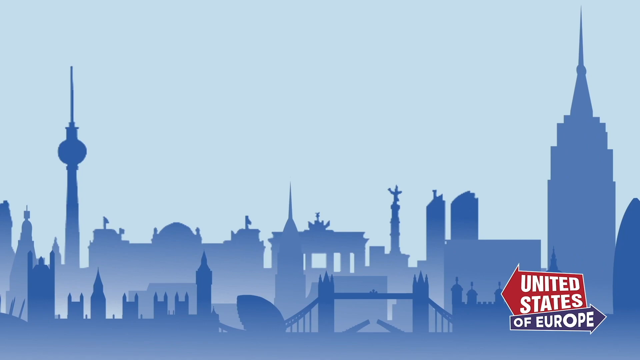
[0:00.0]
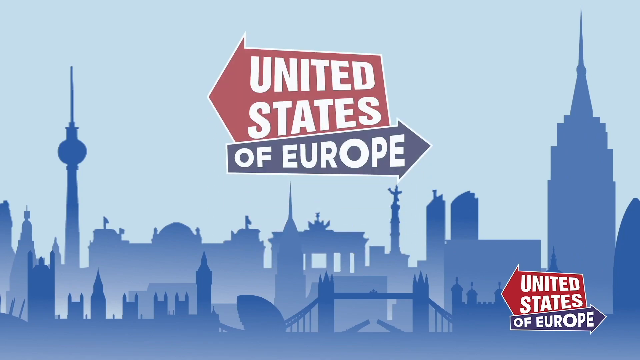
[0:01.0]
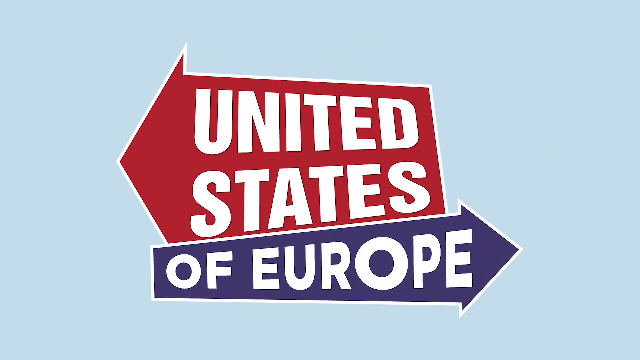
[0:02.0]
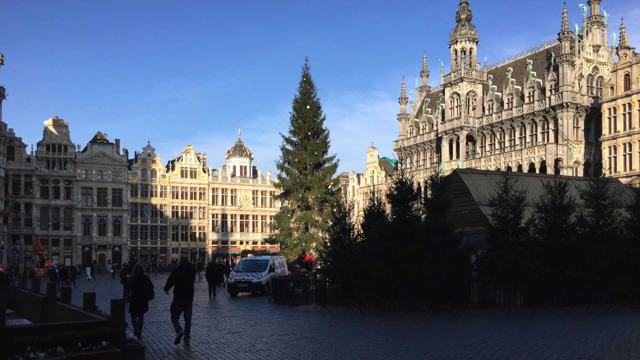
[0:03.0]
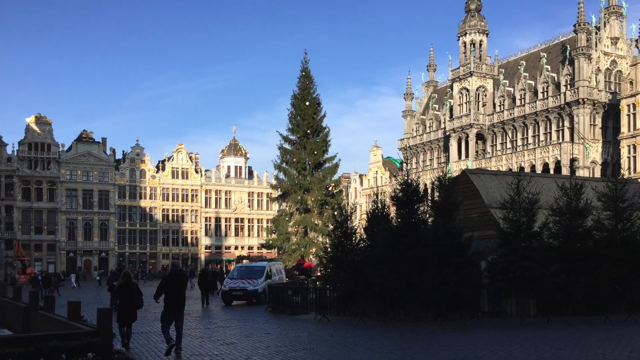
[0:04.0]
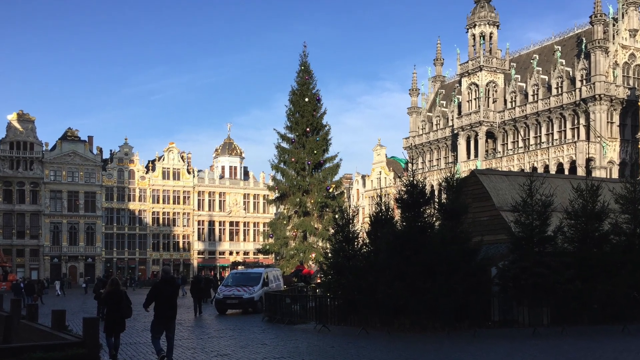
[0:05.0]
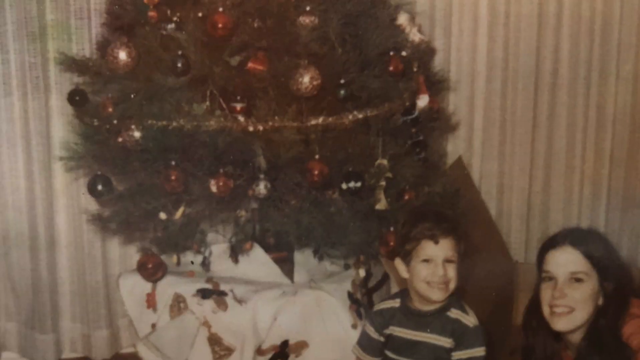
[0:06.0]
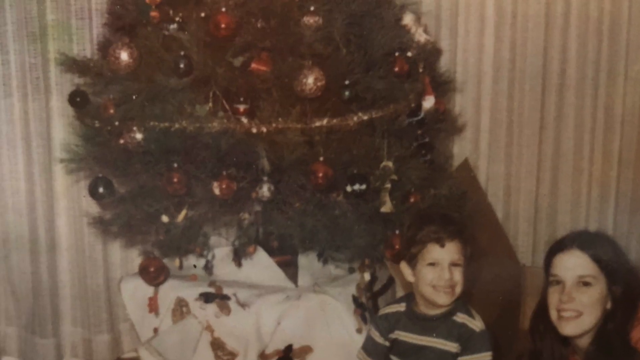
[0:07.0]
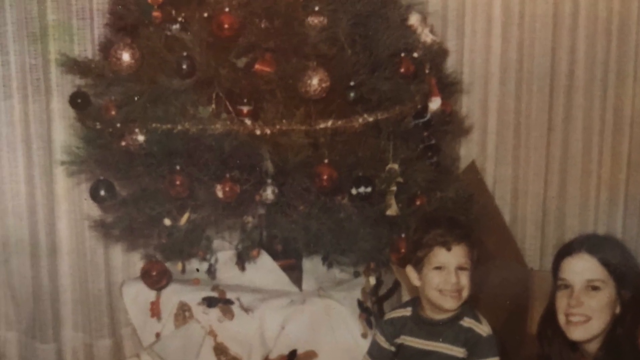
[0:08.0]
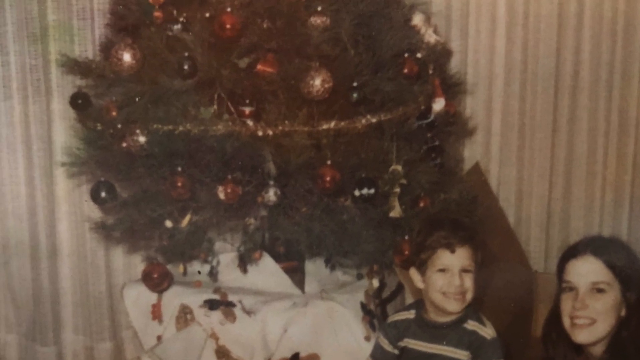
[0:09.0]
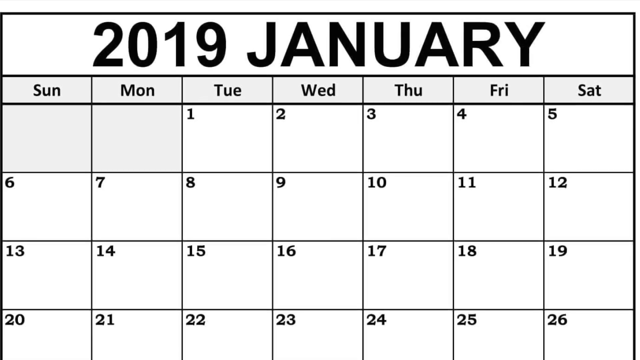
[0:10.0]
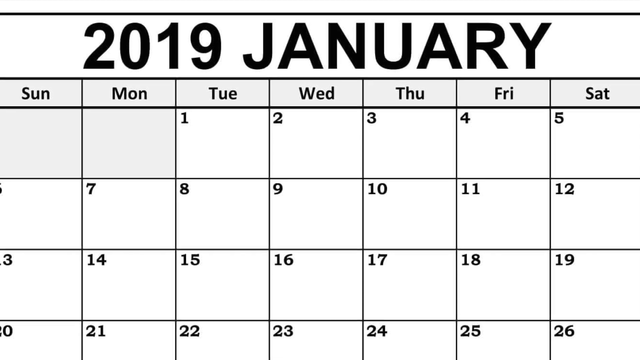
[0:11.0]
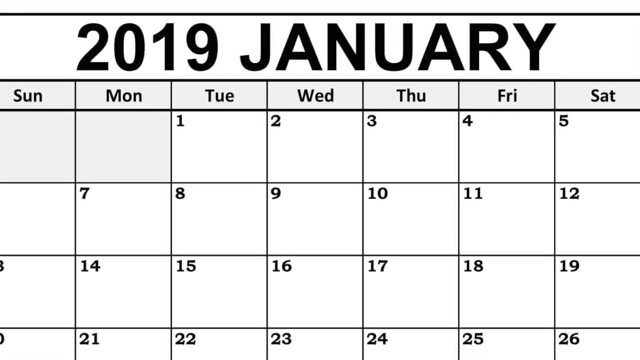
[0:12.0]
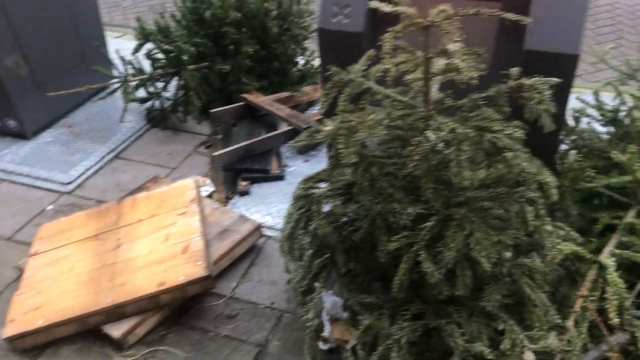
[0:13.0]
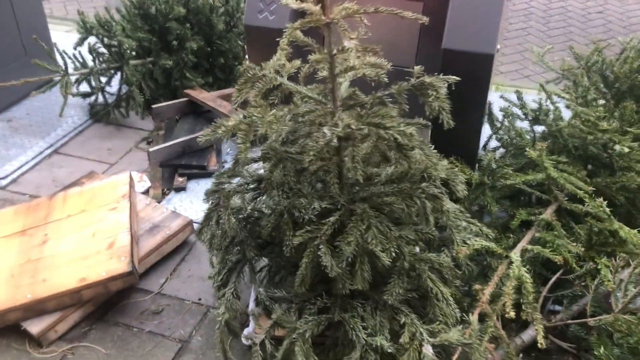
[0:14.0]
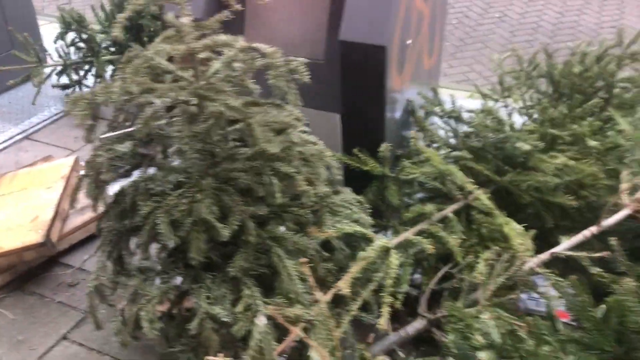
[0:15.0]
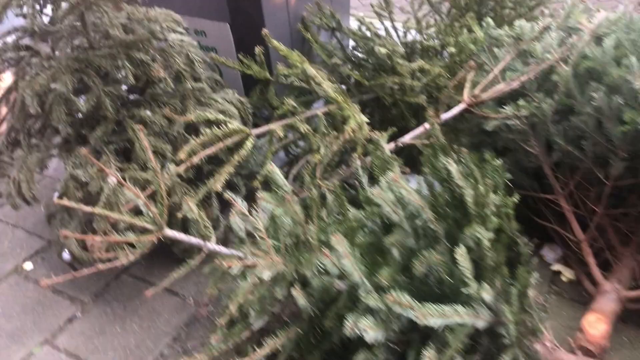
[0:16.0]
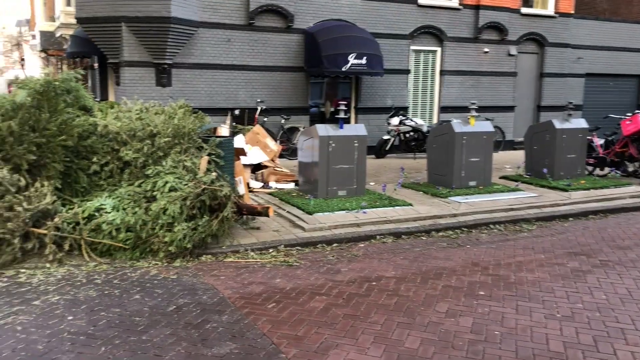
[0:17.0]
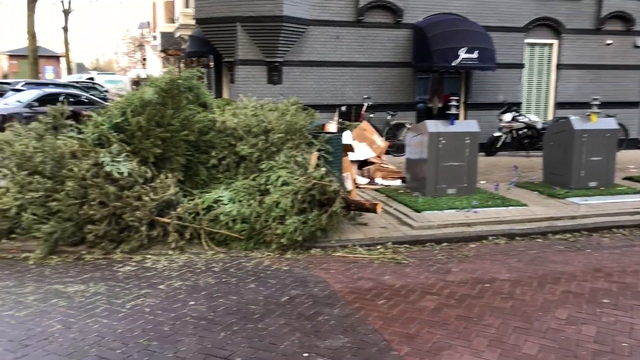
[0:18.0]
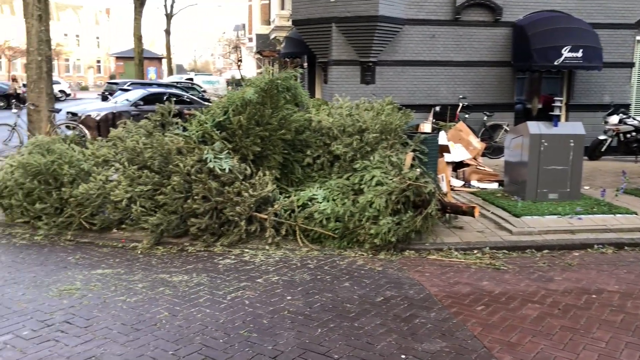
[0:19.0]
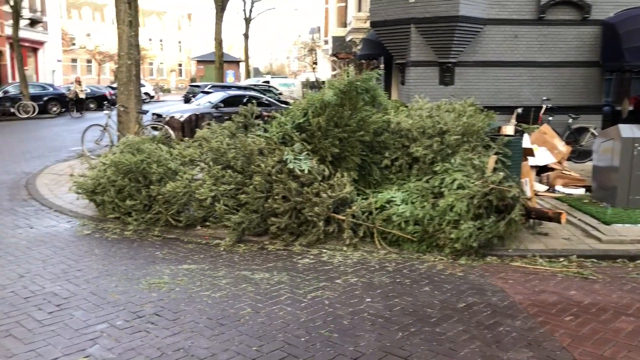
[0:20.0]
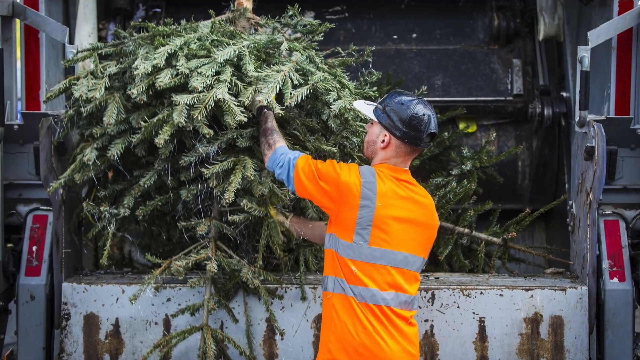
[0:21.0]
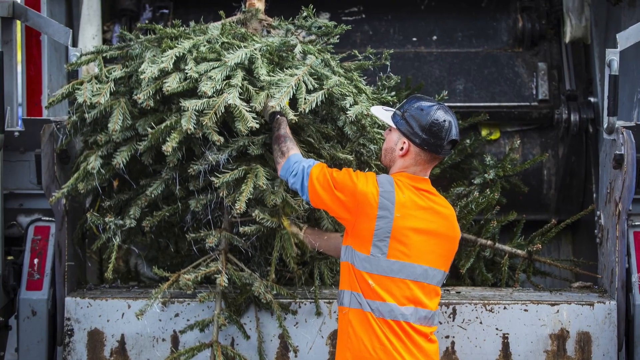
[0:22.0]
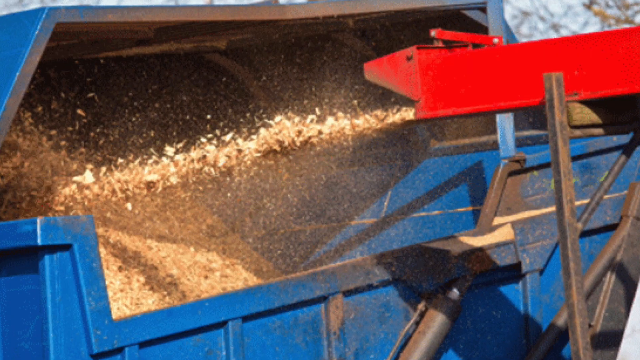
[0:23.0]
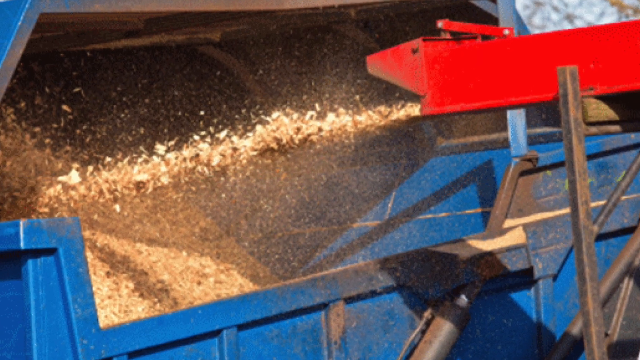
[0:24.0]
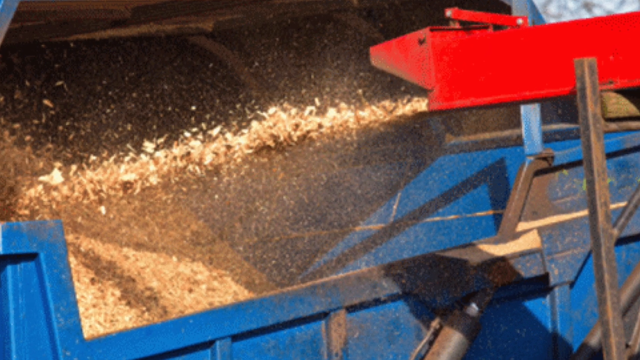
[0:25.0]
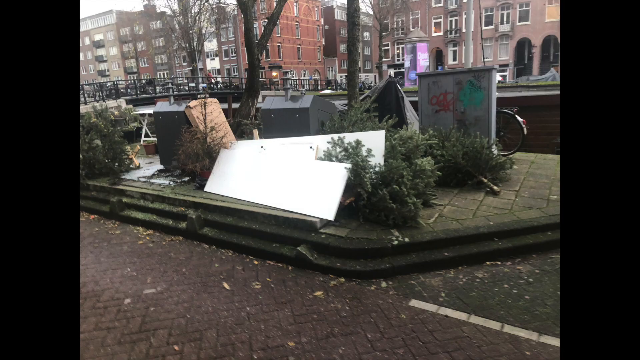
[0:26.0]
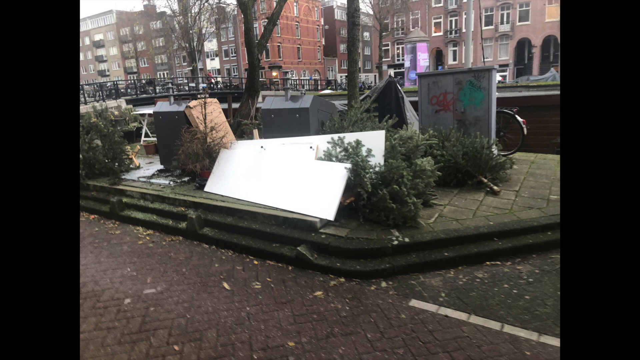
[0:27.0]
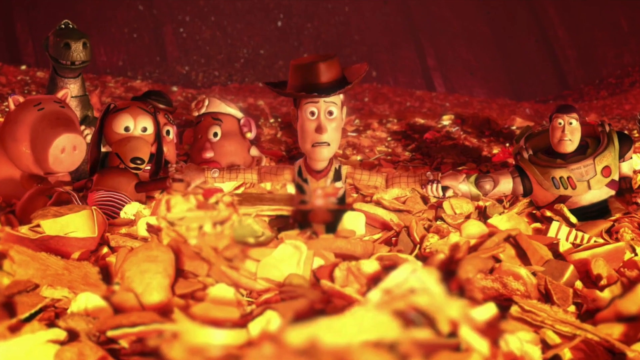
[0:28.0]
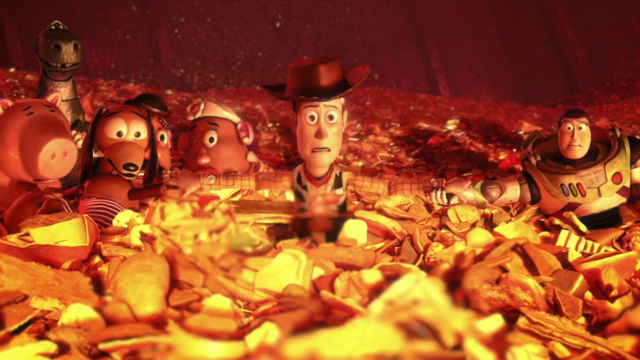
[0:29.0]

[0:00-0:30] A calendar for January 2019 appears, showing 31 days. In another scene, trees are being pruned, possibly as part of a cleanup after Christmas. Trees have been ground up, and there is a major cleanup underway in the streets. There is graffiti on a wall, and cartoons appear. The video apparently concerns the idea of a United States of Europe.